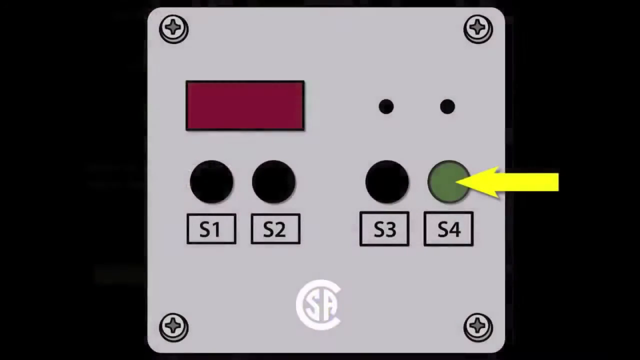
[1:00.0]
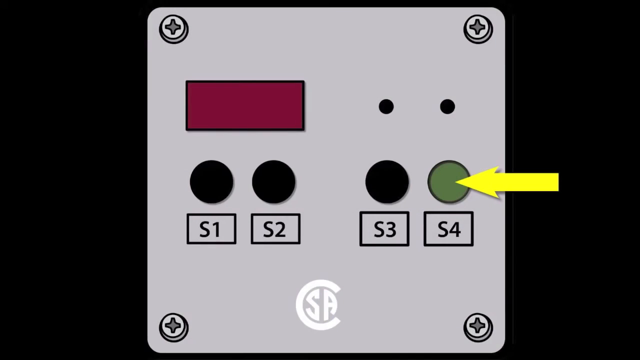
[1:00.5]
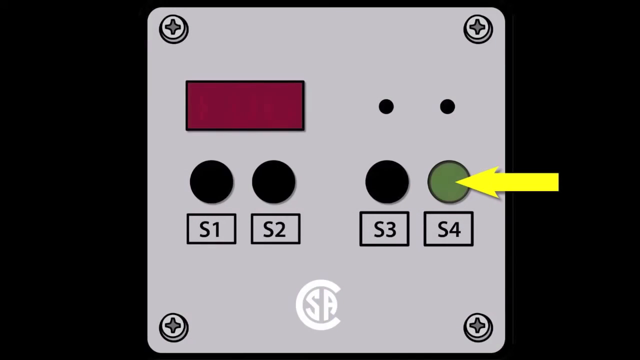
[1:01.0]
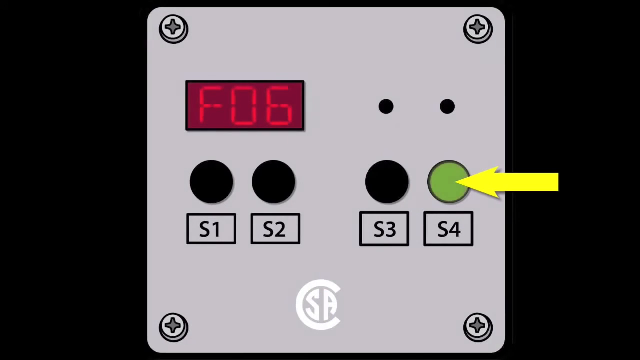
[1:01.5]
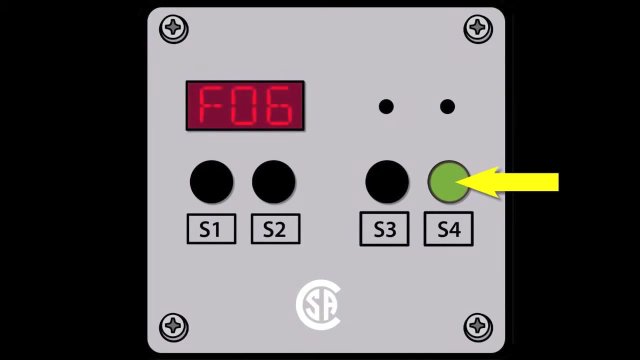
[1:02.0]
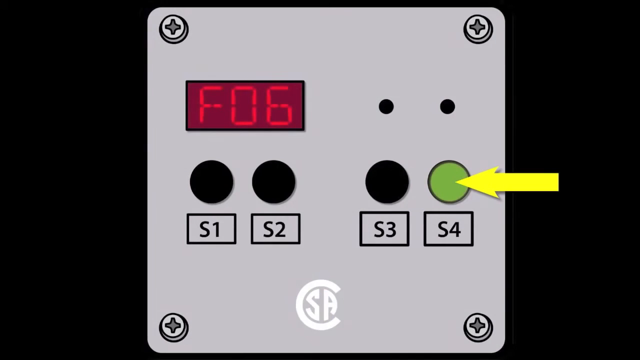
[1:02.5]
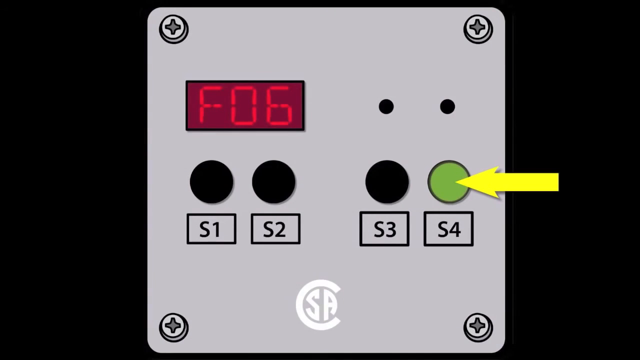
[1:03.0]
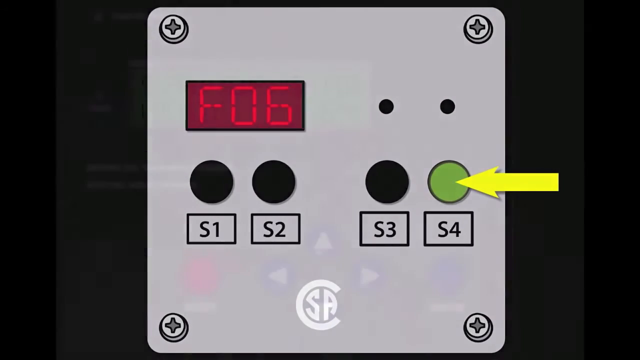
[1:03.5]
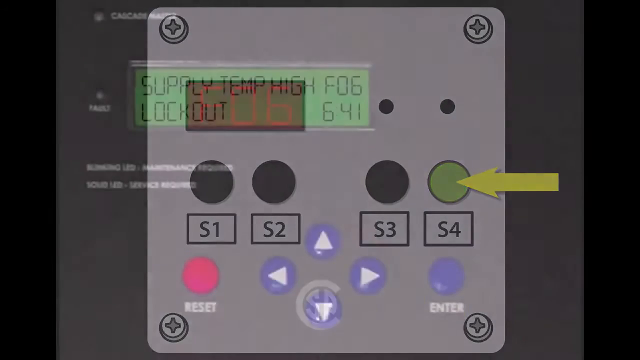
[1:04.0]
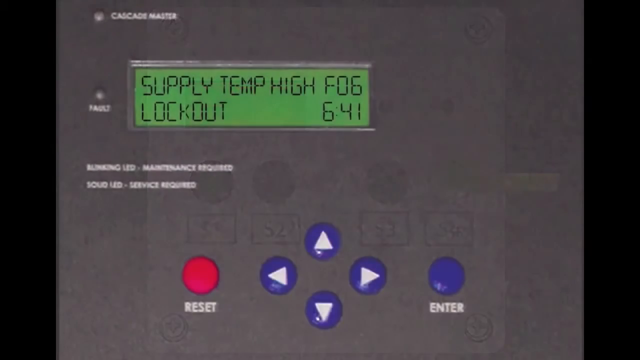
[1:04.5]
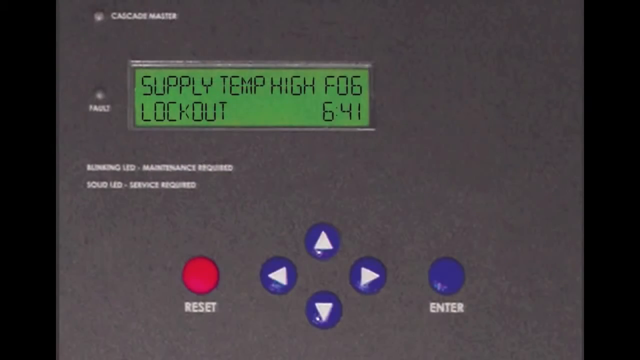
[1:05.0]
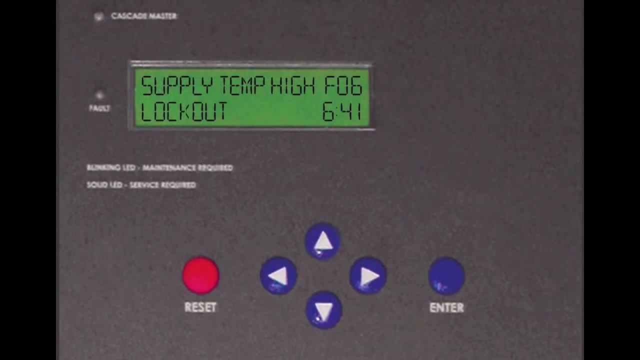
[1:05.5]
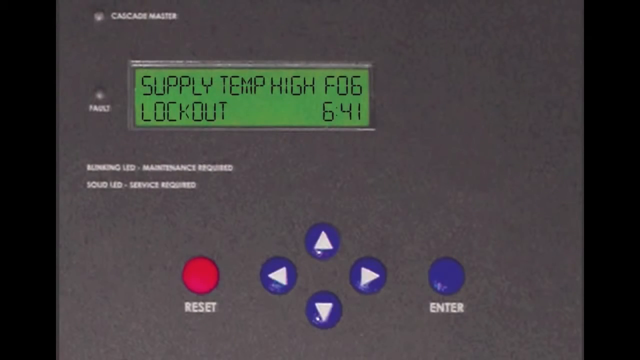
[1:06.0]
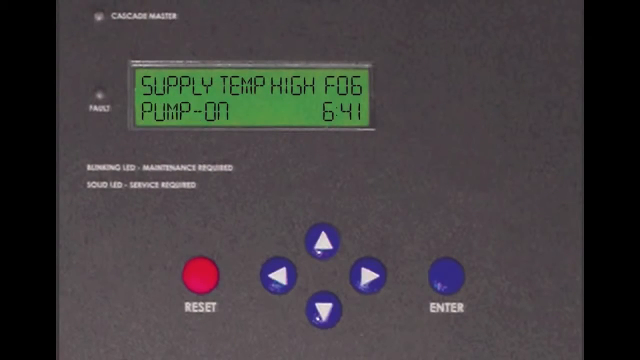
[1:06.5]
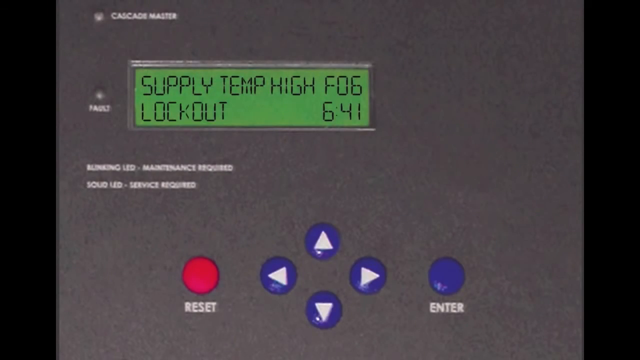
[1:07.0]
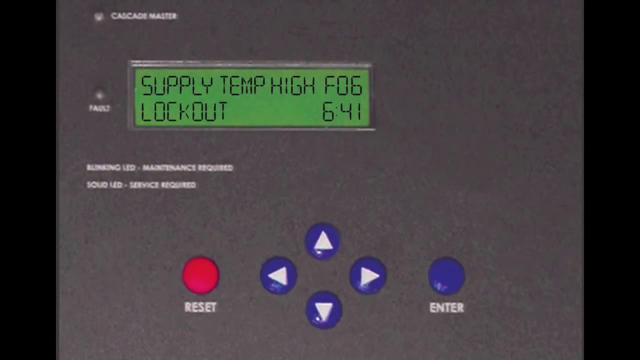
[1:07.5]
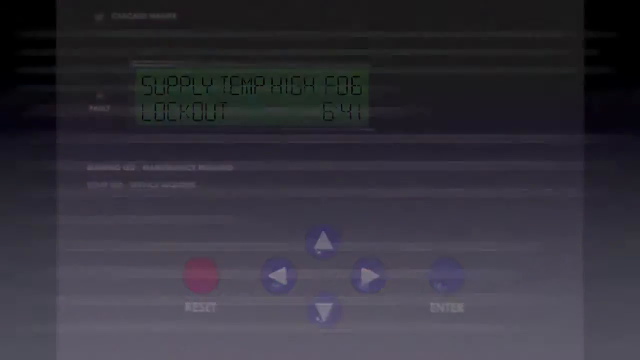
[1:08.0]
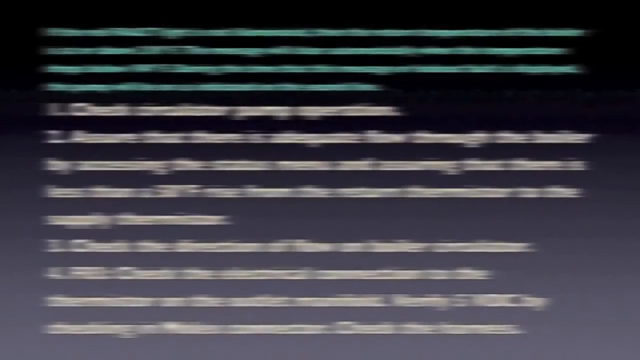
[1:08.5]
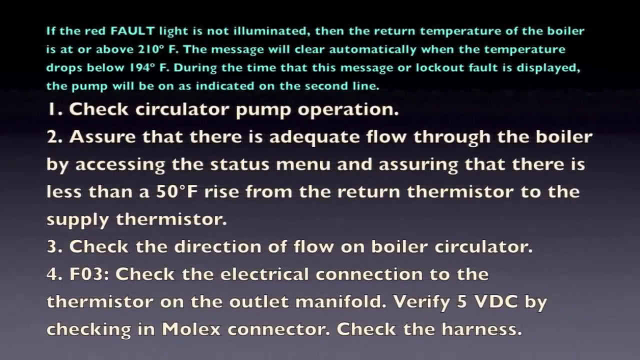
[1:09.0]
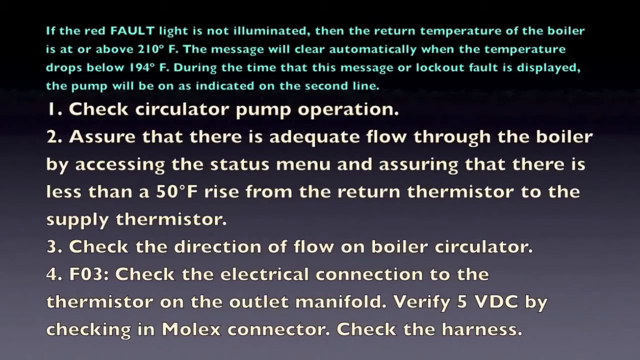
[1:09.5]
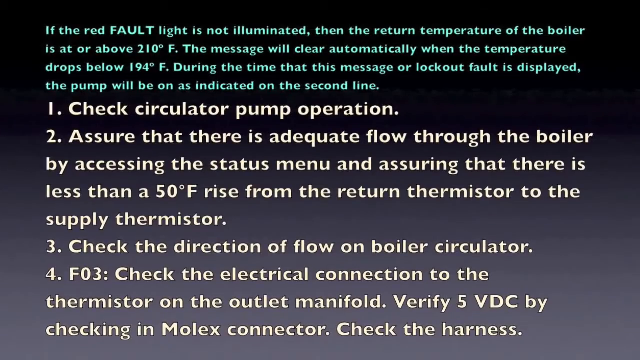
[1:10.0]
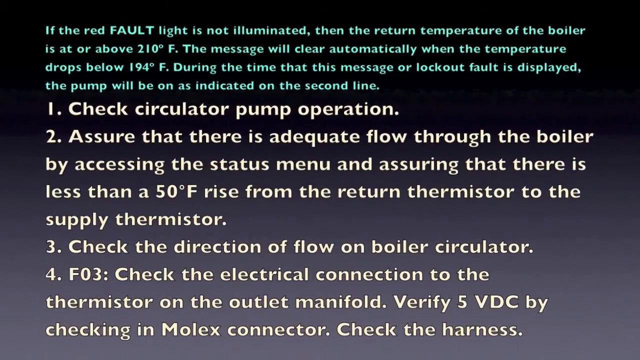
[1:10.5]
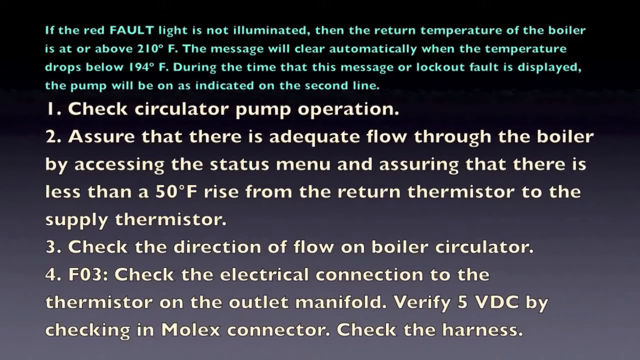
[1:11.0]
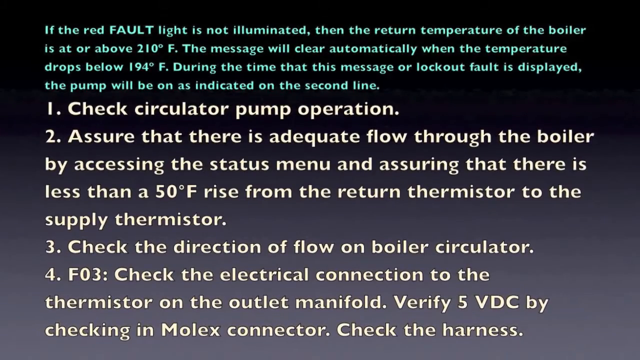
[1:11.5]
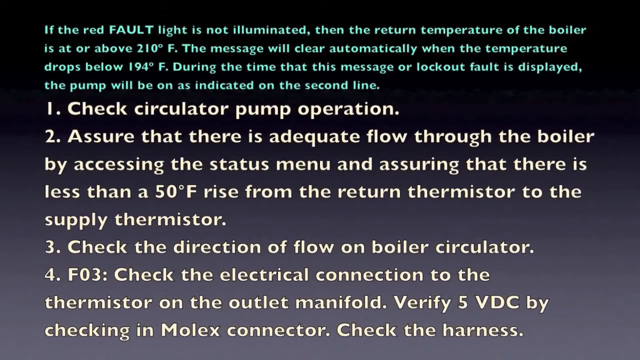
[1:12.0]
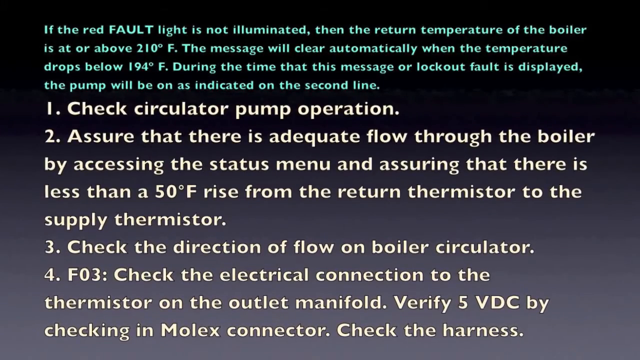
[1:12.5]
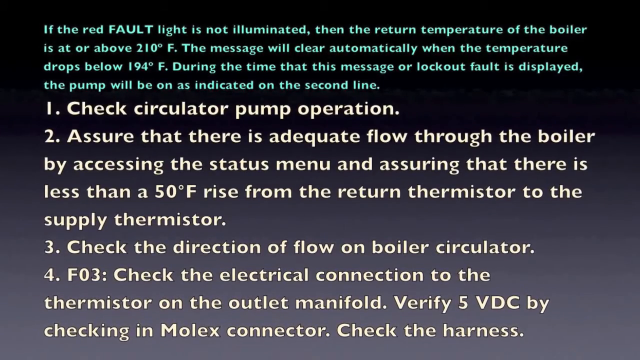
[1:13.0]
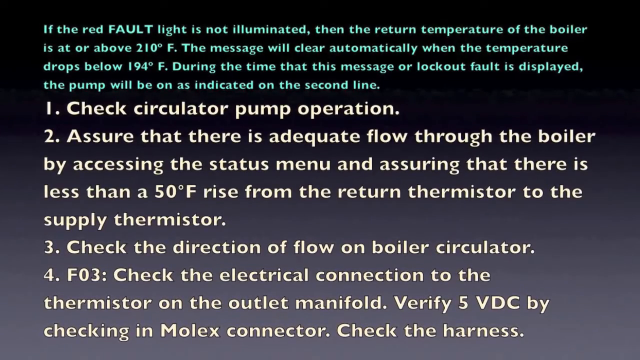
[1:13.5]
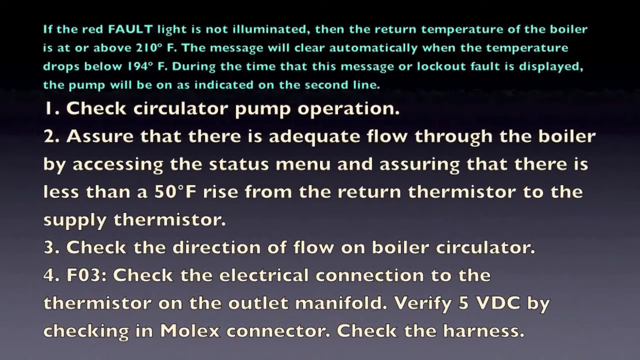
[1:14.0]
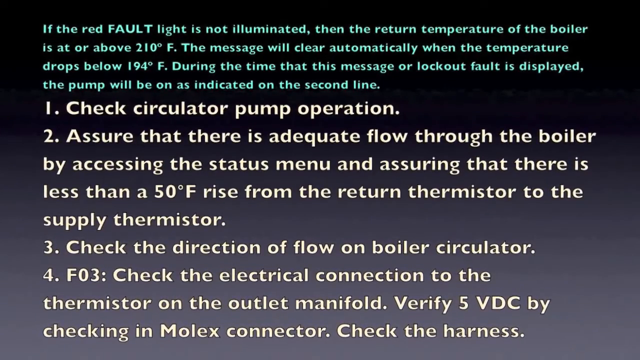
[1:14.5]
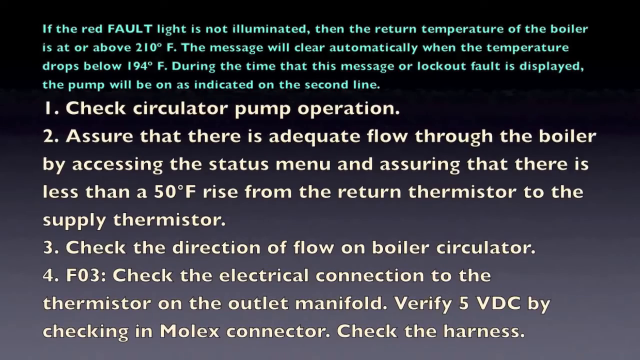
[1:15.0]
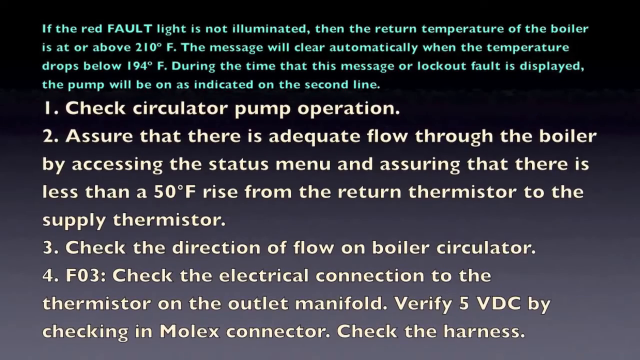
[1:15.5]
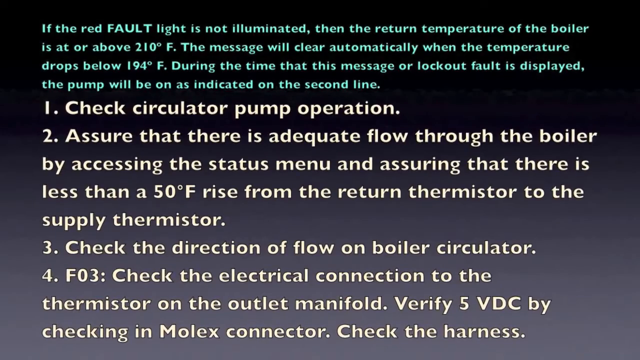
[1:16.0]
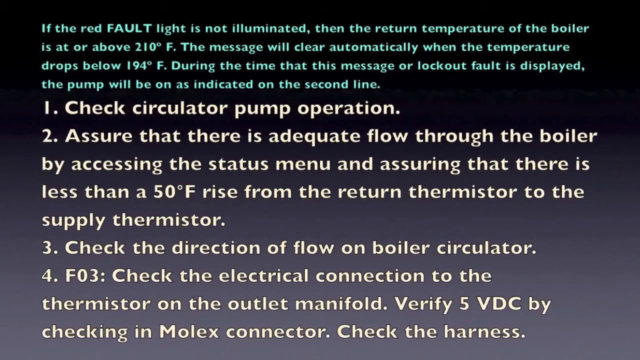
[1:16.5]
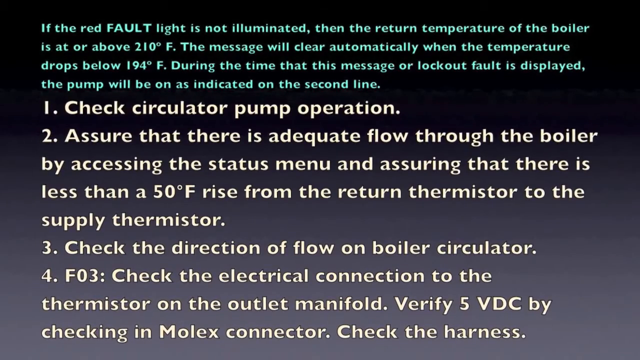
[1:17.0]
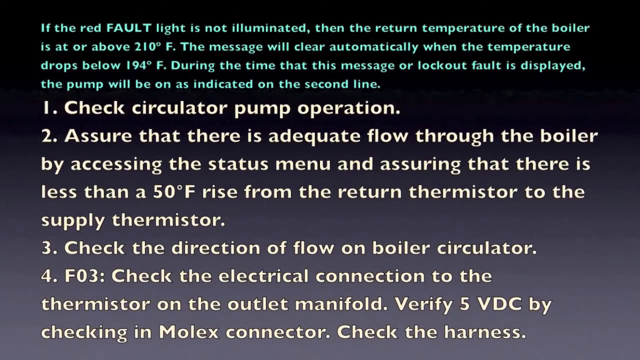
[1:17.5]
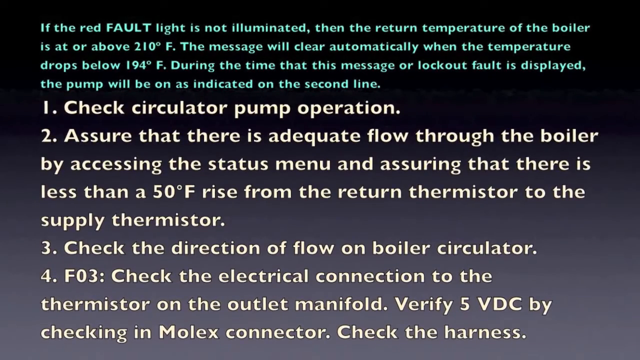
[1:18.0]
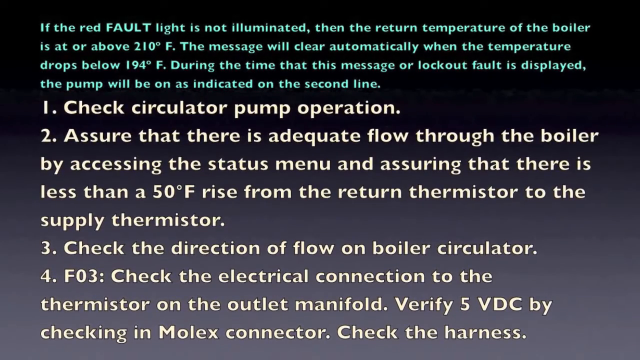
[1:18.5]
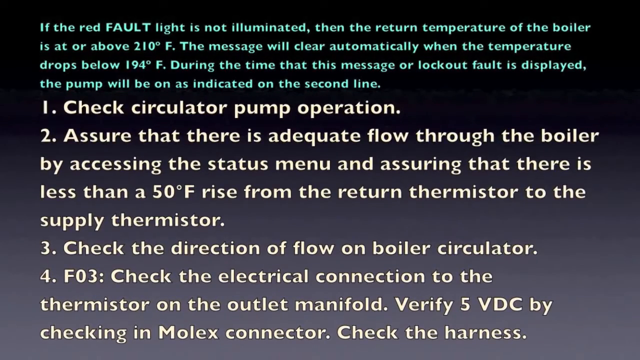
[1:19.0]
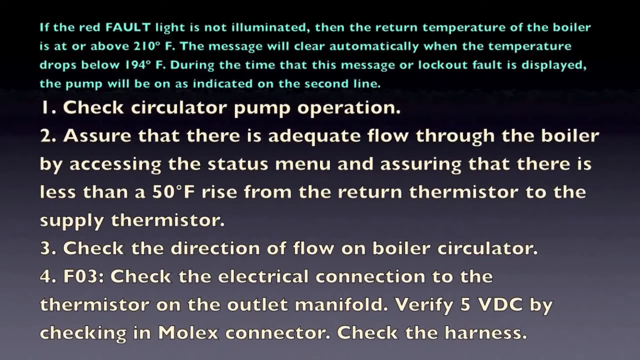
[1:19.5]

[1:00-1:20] The video returns to the grey box with the screws, again with the yellow arrow pointing toward the S4 button. It then goes back to the other grey display, which has no highlighted areas; the display says "supply temp high F06, lockout 641", then changes to "pump on" and back to "lockout". Next comes the gradient black background screen with new text. At the top, in a light green color, it says "if the red fault light is not illuminated then the return temperature of the boiler is at or above 210 degrees F. The message will clear automatically when the temperature drops below 194 degrees F. During this time that this message is displayed, the pump will be on as indicated on the second line." Below, in larger white text: "1 check circulator pump operation, 2 assure that there is adequate flow through the boiler by accessing the status menu and assuring that there is less than 50 degrees rise from the return thermistor to the supply thermistor, 3 check the direction of flow on boiler circulator, for F03 check the electrical connection to the thermistor on outlet manifold, verify 5VDC by checking in the molex connector, check the harness." This stays on screen for a while so the text is readable.